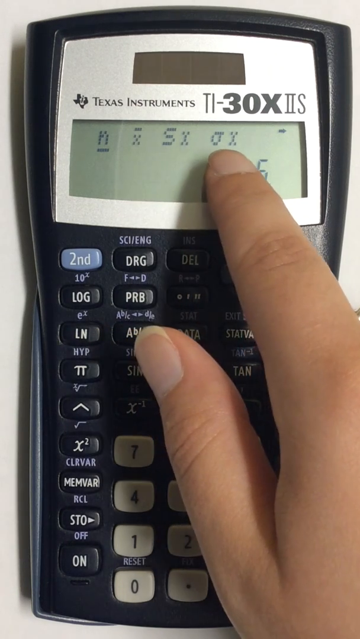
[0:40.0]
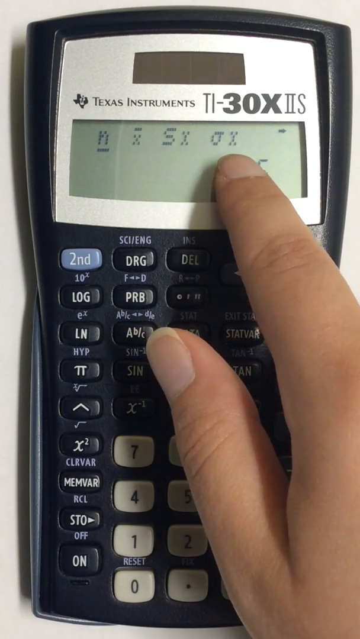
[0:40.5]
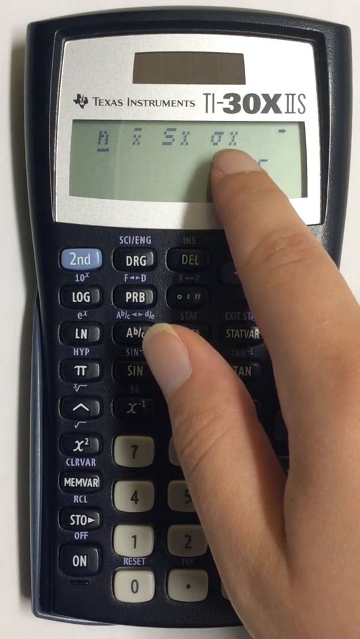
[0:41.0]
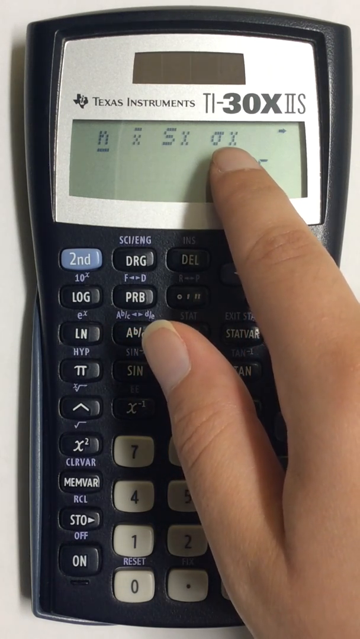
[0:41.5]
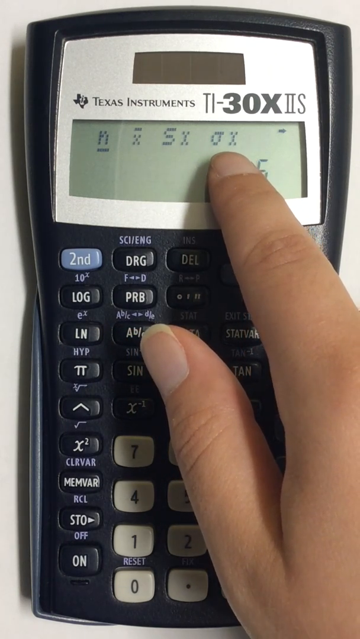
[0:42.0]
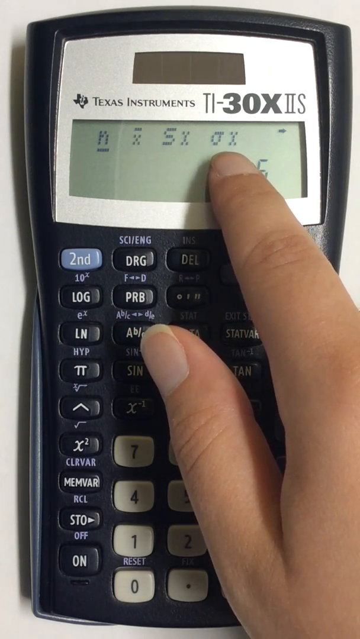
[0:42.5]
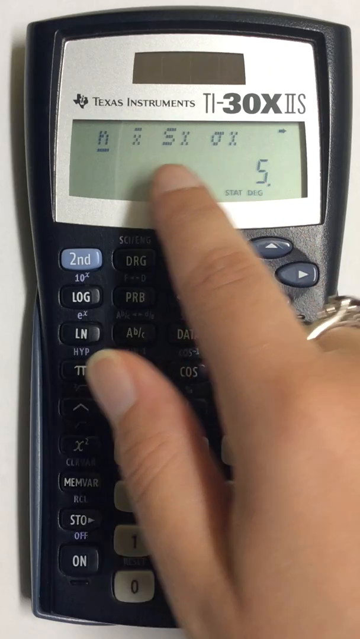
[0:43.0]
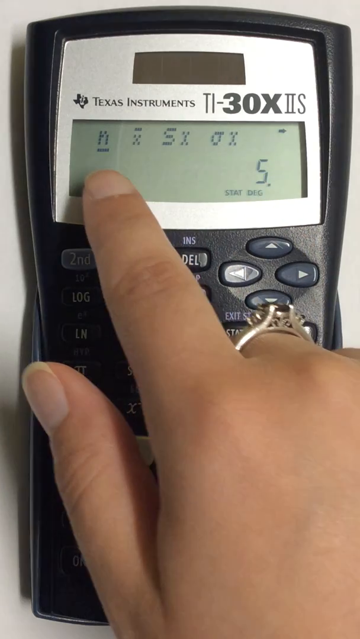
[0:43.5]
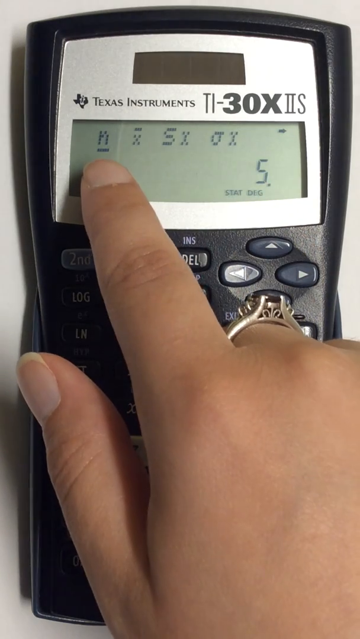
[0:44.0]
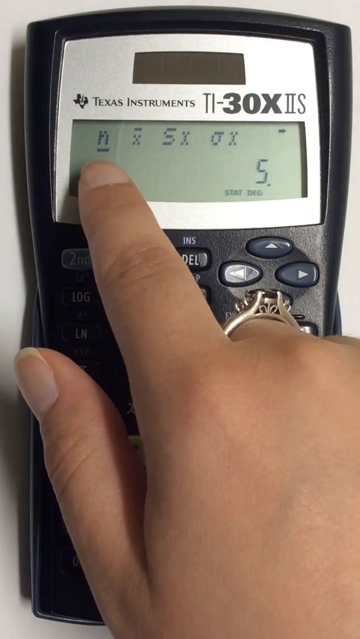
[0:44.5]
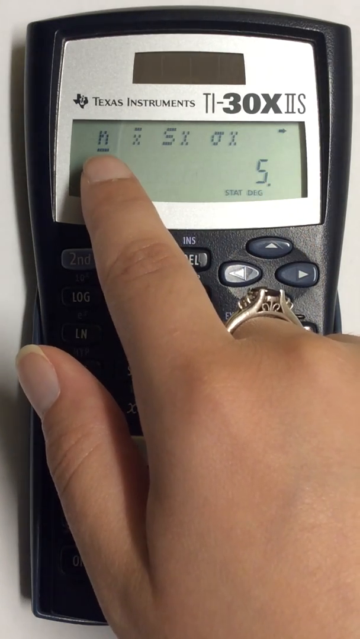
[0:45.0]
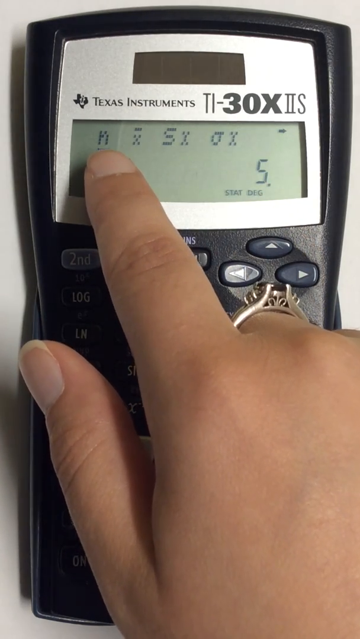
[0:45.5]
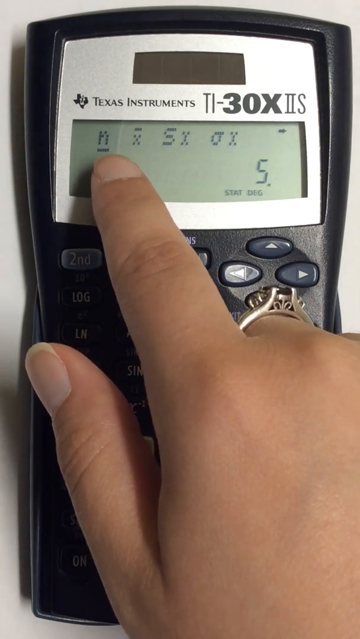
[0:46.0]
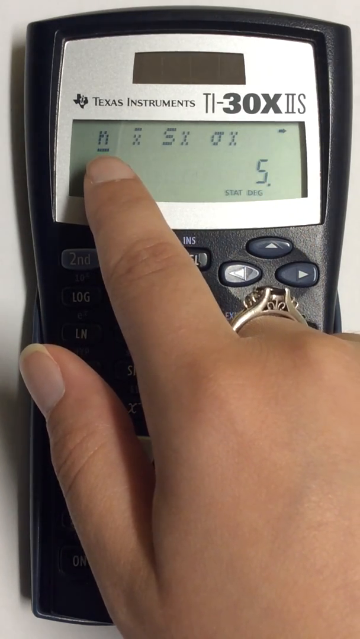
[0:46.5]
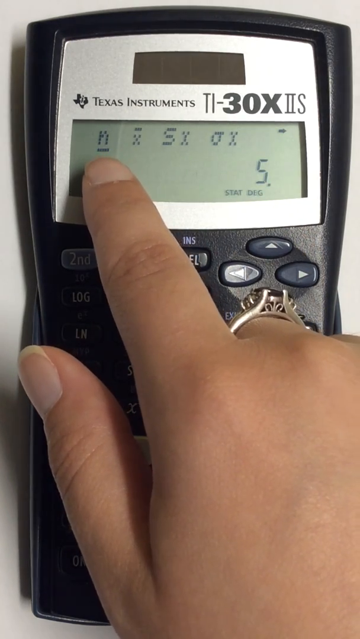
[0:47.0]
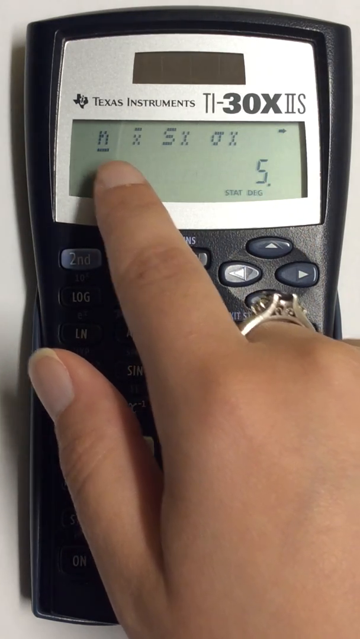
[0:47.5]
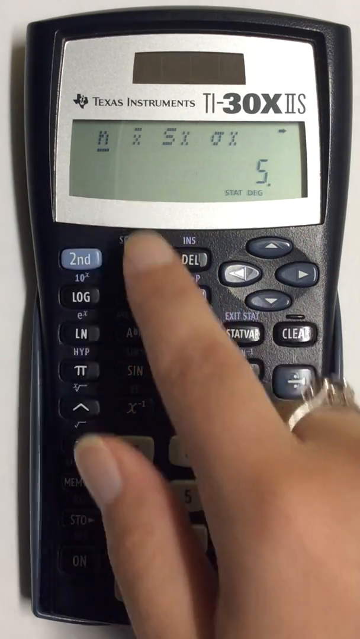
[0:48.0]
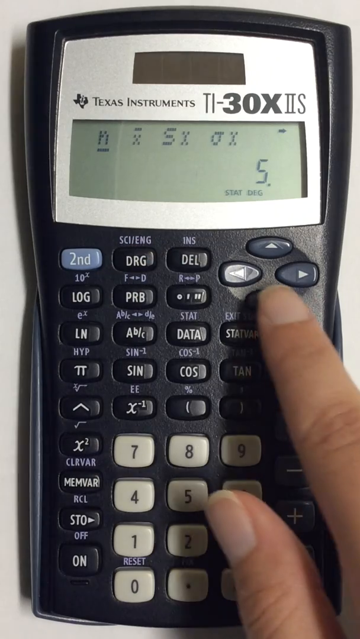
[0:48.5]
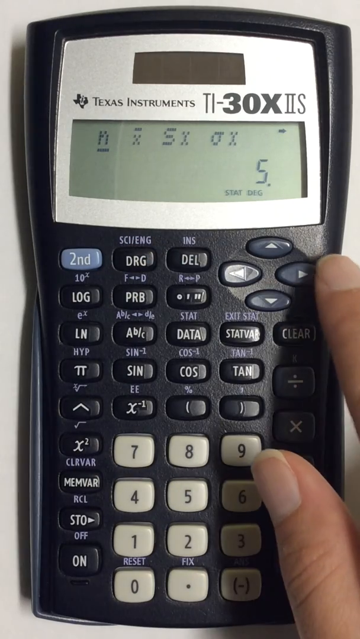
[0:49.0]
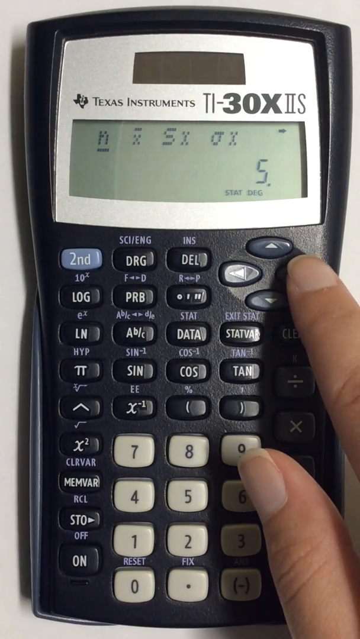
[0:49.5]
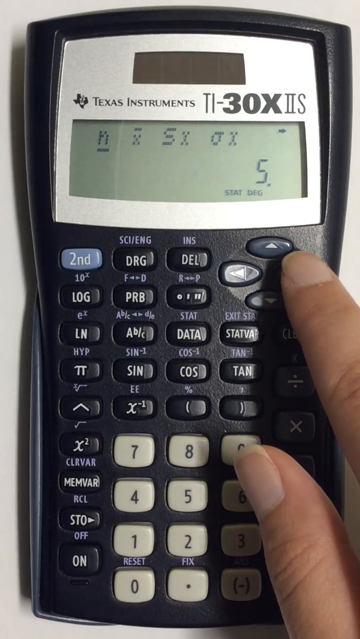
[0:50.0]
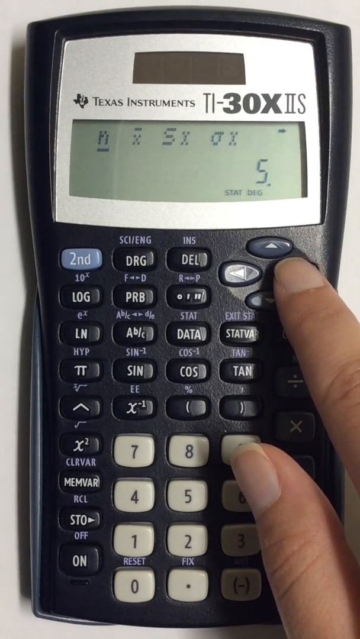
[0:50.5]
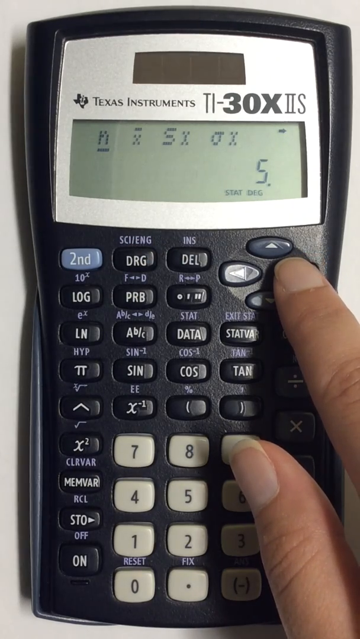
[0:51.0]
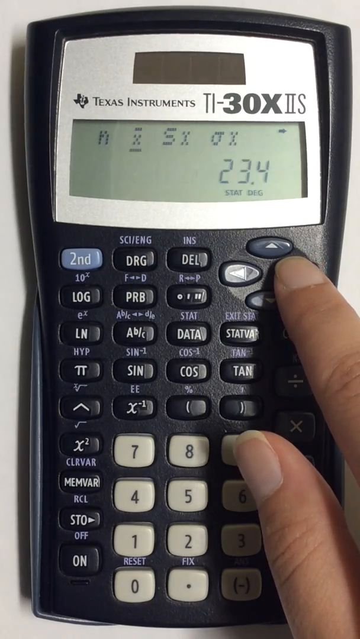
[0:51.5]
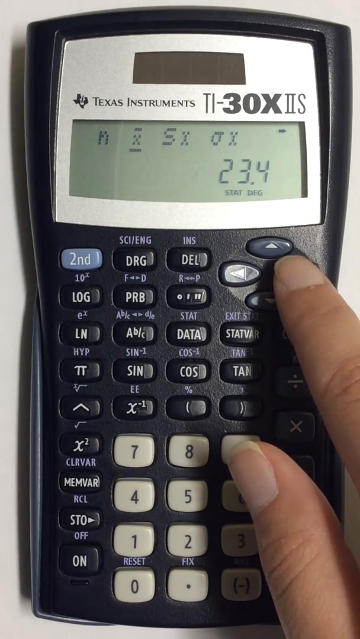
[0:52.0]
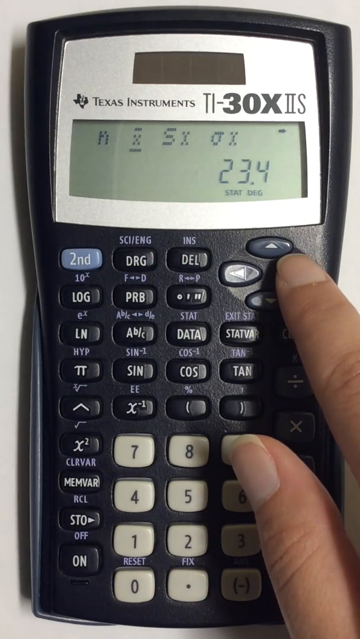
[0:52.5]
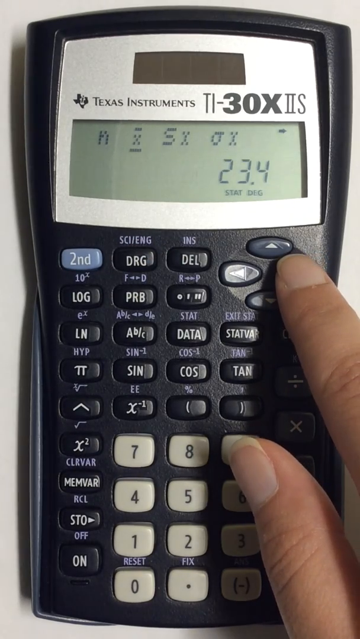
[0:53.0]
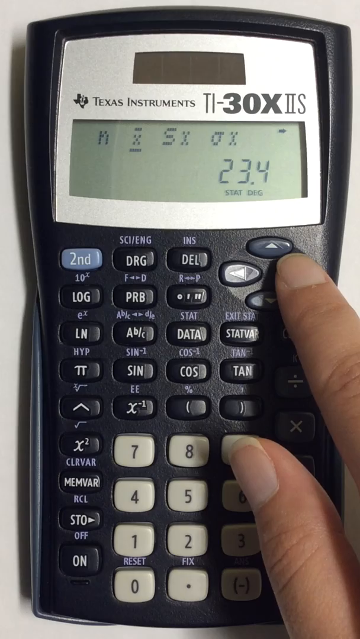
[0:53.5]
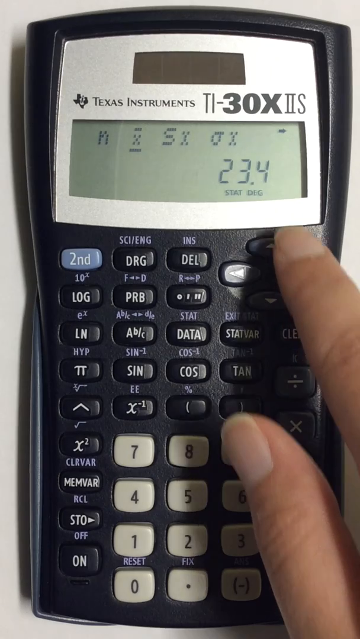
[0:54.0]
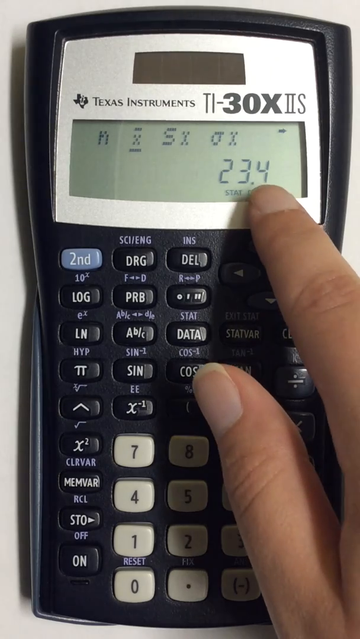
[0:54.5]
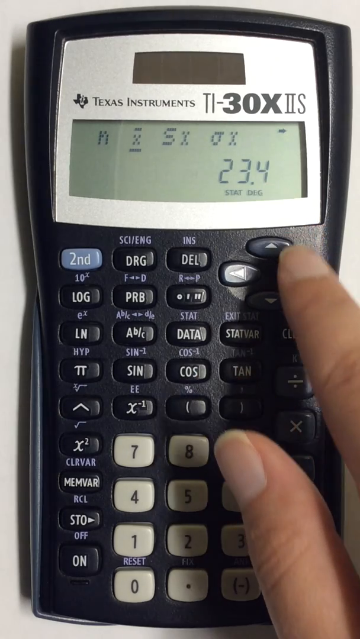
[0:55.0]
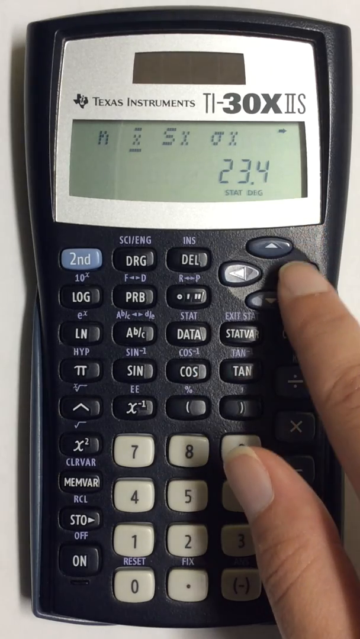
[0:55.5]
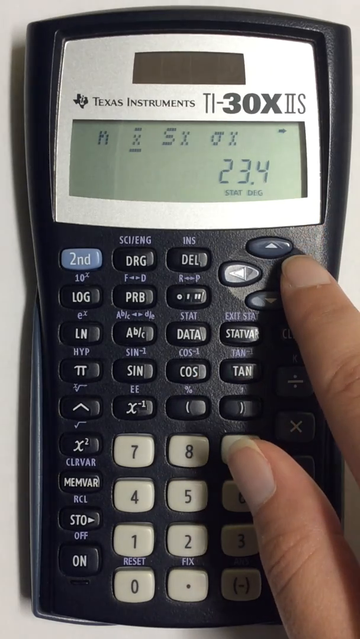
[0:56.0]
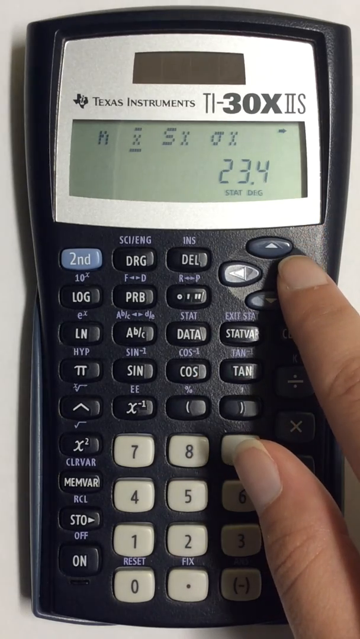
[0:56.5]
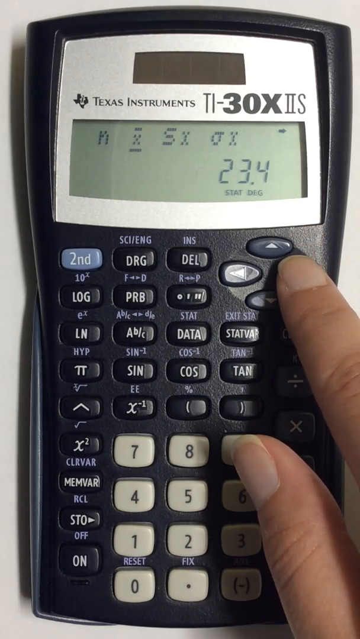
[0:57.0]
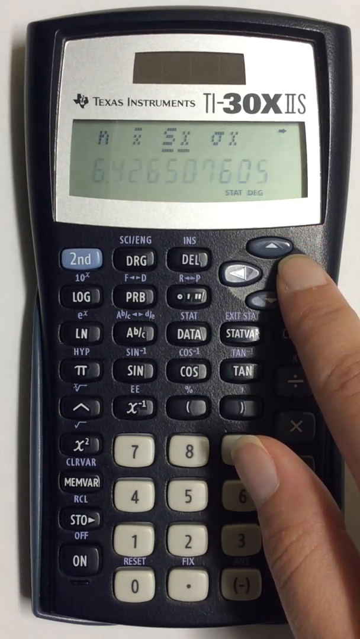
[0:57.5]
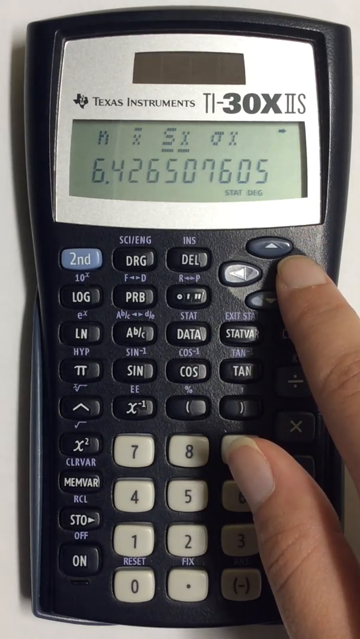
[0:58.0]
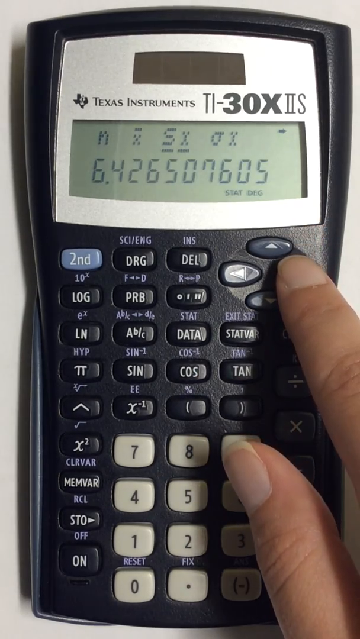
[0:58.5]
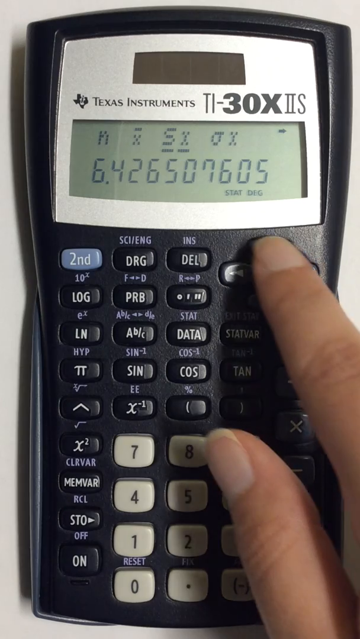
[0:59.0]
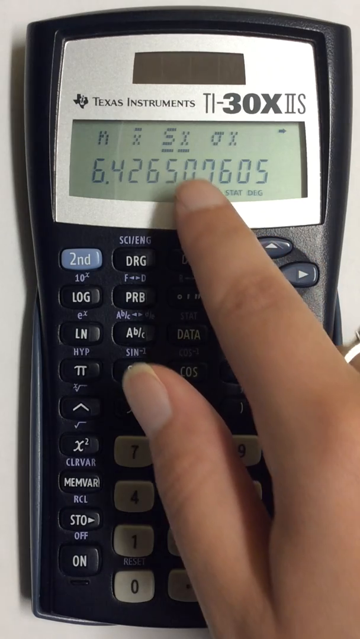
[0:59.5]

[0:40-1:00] A Texas Instruments 30X2 calculator shows some symbols on its display screen while a person's hand points at the screen. There are dark blue buttons, a lighter blue button that says "second", and gray buttons with the numbers 0 through 9. The person points at some of the symbols on the display, then at what looks like an N. The hand wears a wedding ring, suggesting it is presumably a woman's. The person moves to the right arrow and presses it, and the display shows 23.4. They point at it, press the button again, and the display shows 6.426507605.